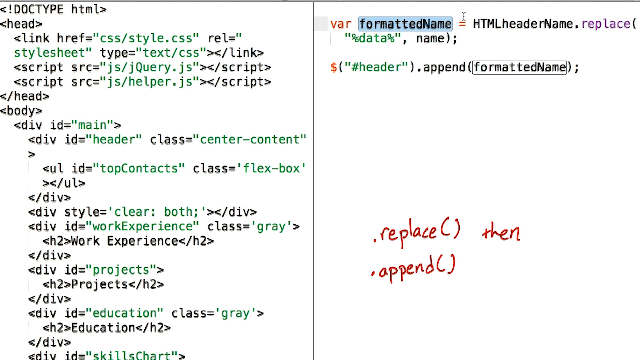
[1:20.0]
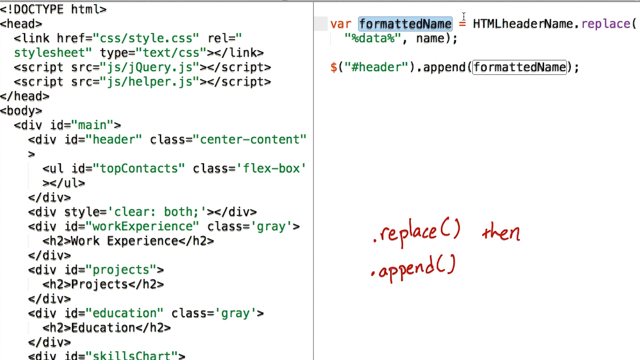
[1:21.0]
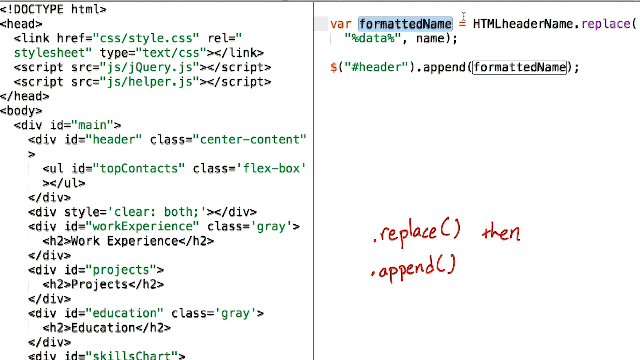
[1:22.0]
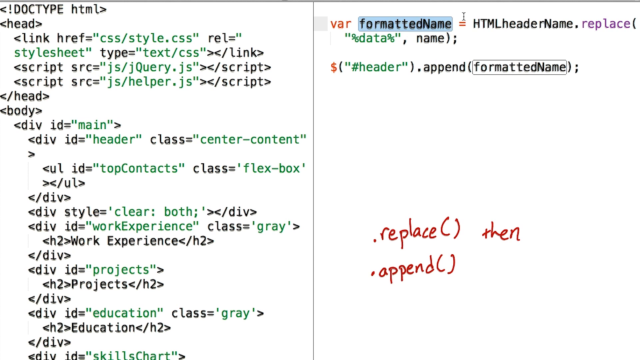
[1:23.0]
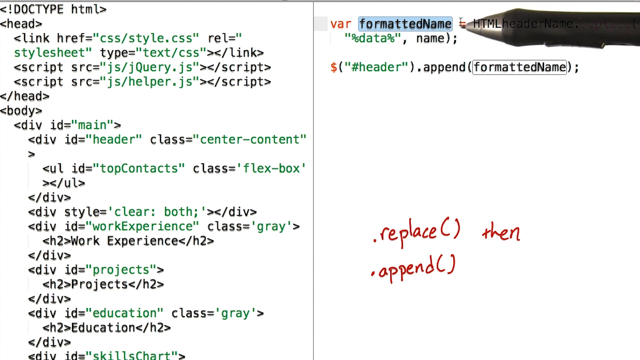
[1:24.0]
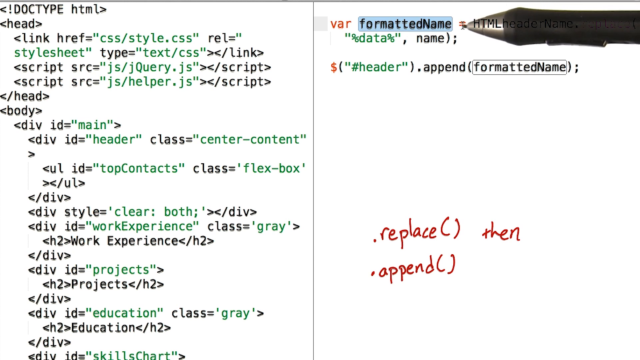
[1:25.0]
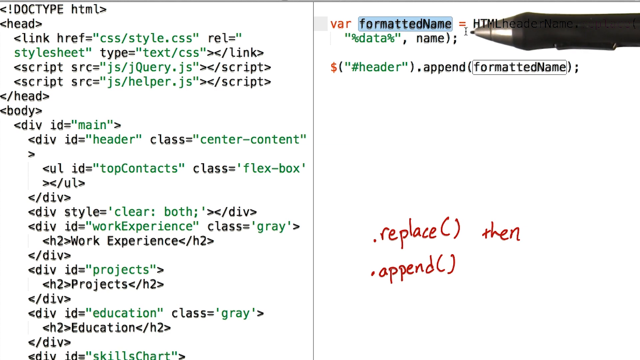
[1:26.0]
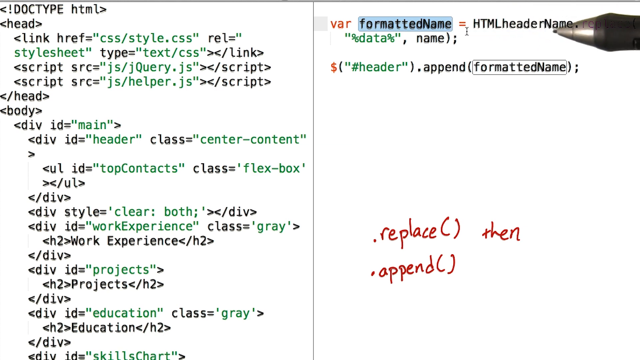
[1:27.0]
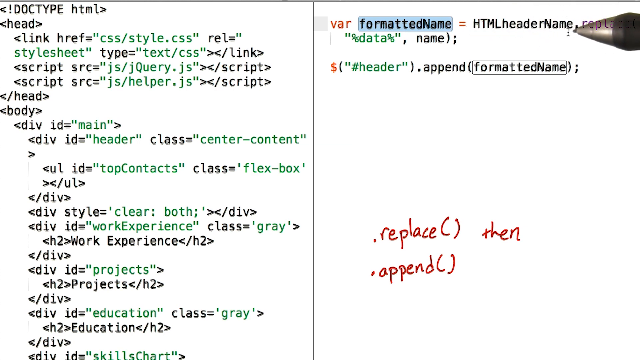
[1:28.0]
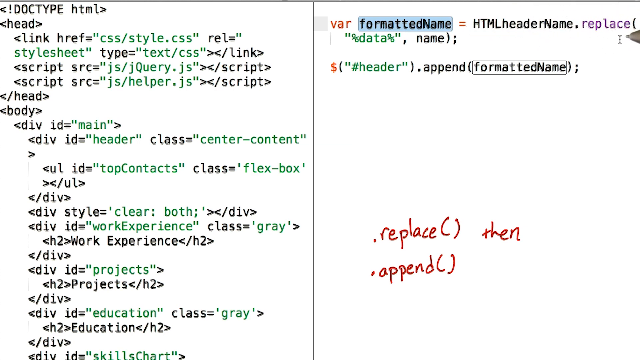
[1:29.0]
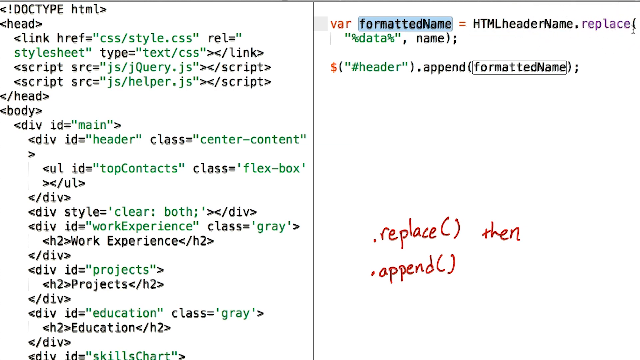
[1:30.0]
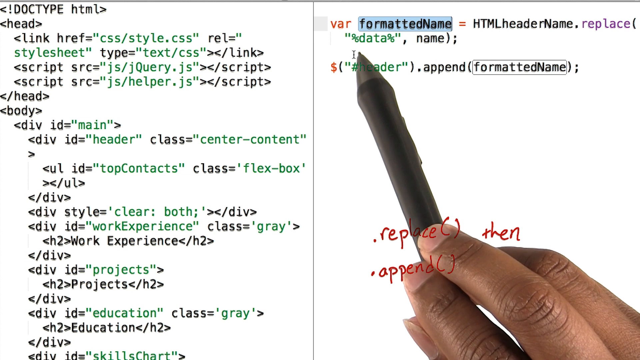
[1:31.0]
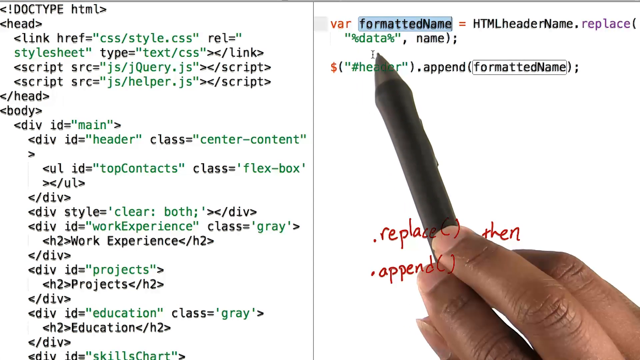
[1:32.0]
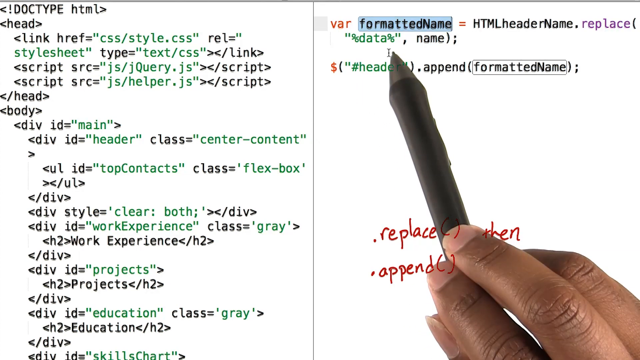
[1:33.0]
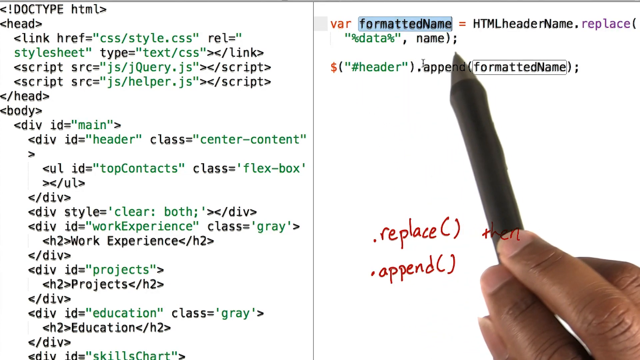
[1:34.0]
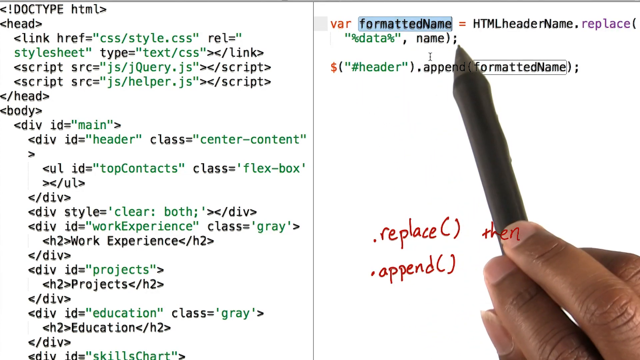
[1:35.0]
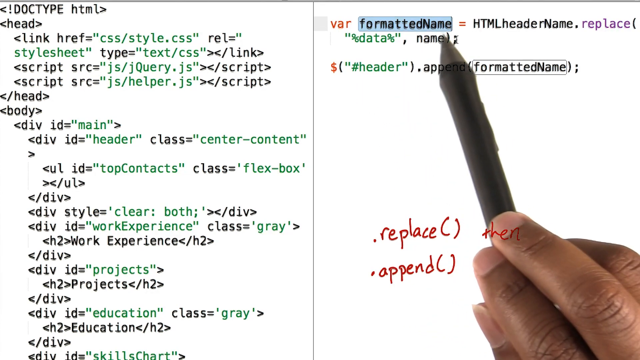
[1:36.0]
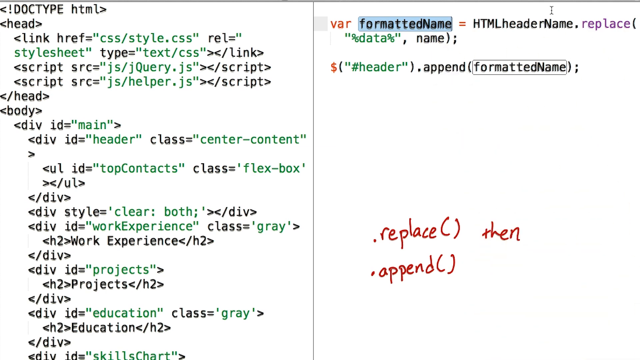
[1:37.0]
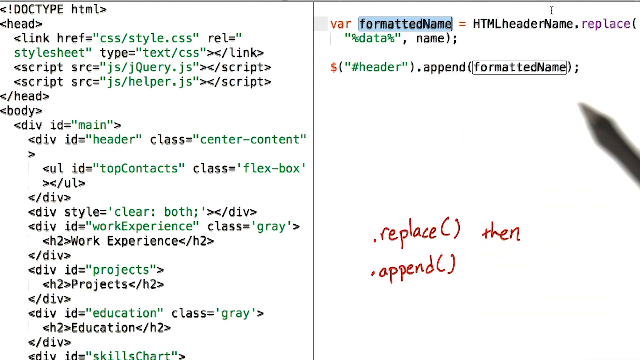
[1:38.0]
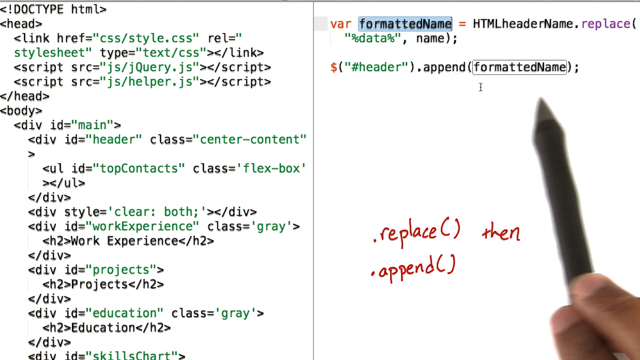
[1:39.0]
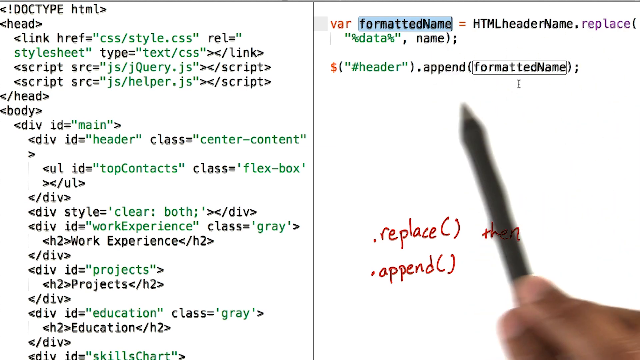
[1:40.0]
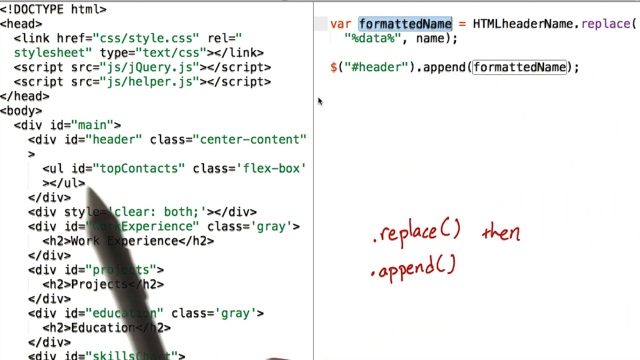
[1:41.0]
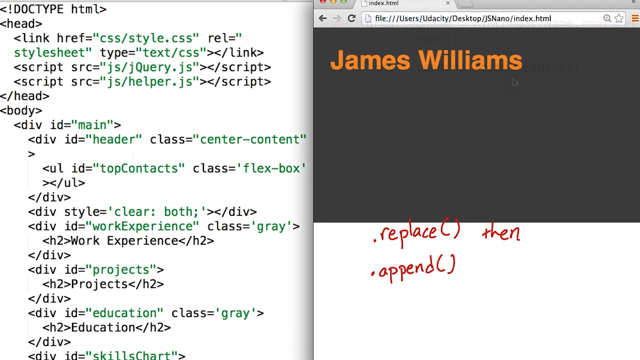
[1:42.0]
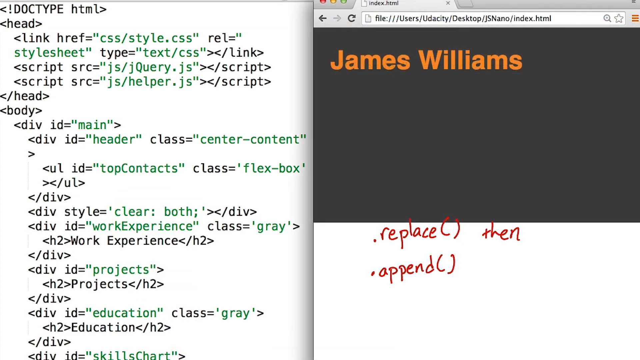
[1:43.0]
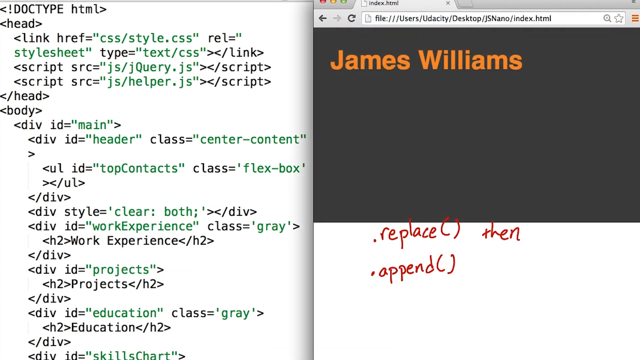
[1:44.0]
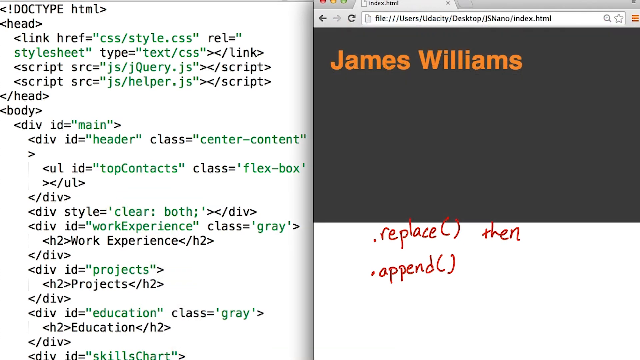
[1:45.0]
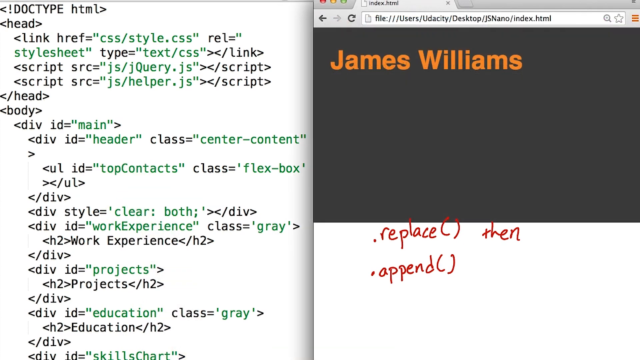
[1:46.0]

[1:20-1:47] The user brings the marker up with its tip pointed at formatted name, then makes a little hop to the right to point at HTML header name, just to its right, and another hop to replace, to the right of that. There is possibly a transition or an animation resetting itself, after which the marker points at percent data. The marker then circles counterclockwise around the last item, name, and then goes down and circles counterclockwise around formatted name. The pen moves over to the left and a new screen appears showing the name James Williams, possibly the author of the video. The window is on a Mac computer, with the Mac buttons visible at the top of the tab, and the URL reads files, users, Udacity, desktop, JS, nano, index.html.